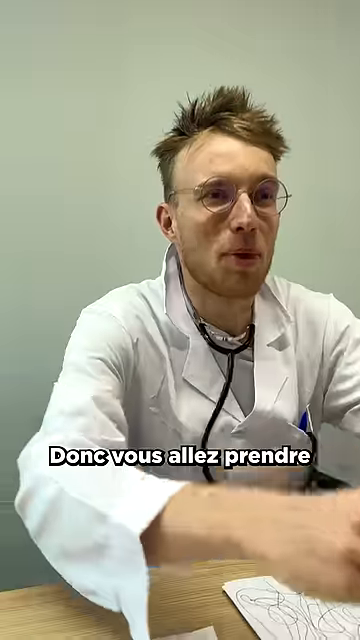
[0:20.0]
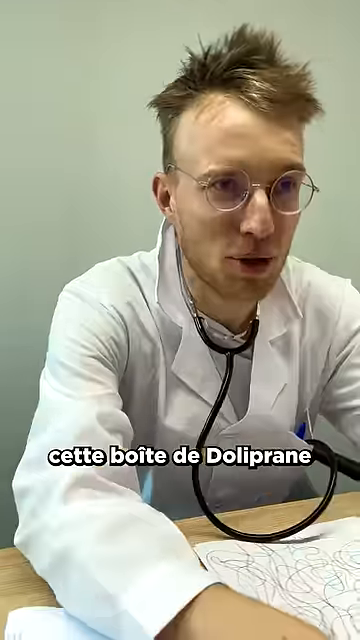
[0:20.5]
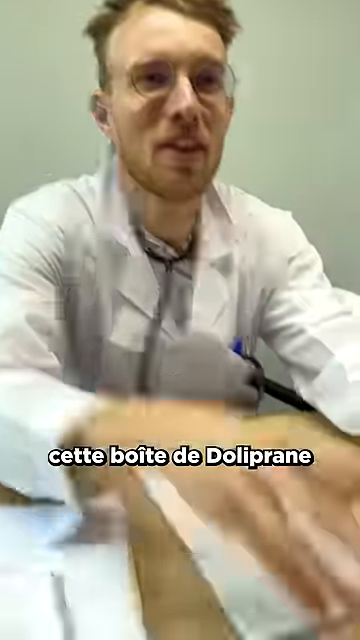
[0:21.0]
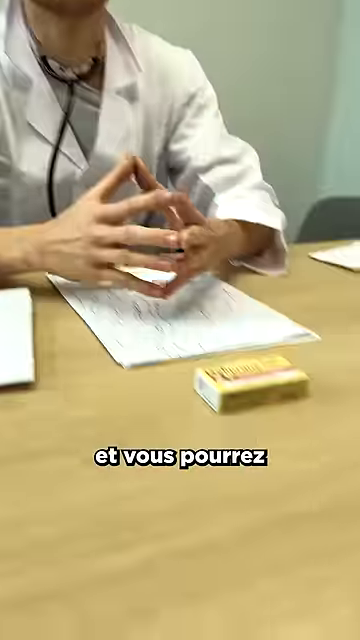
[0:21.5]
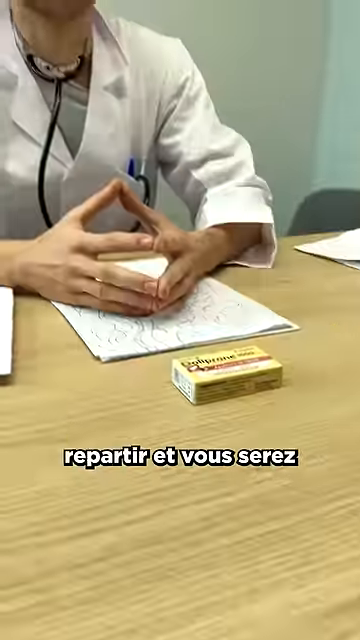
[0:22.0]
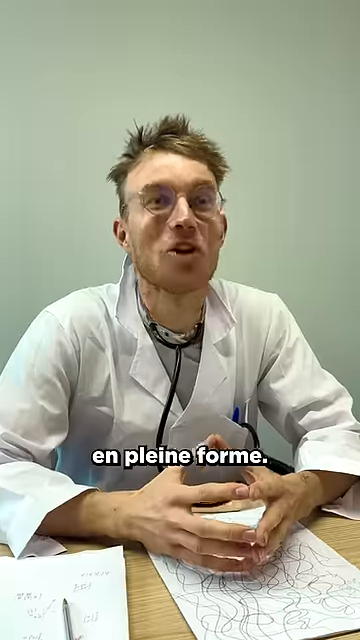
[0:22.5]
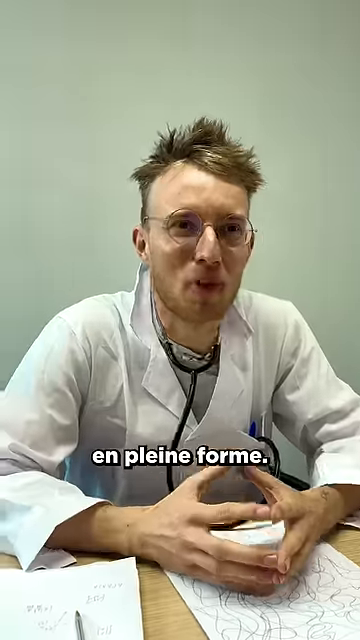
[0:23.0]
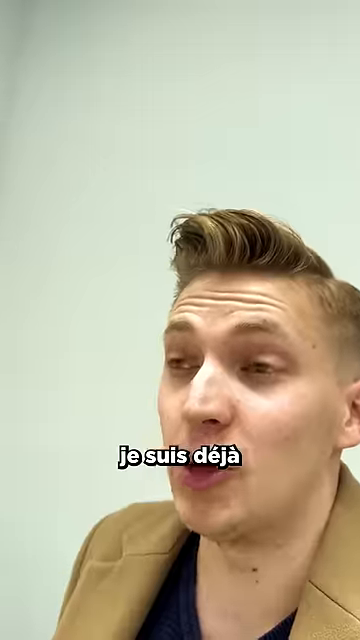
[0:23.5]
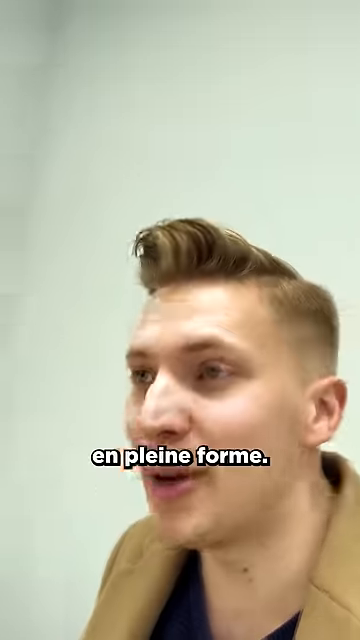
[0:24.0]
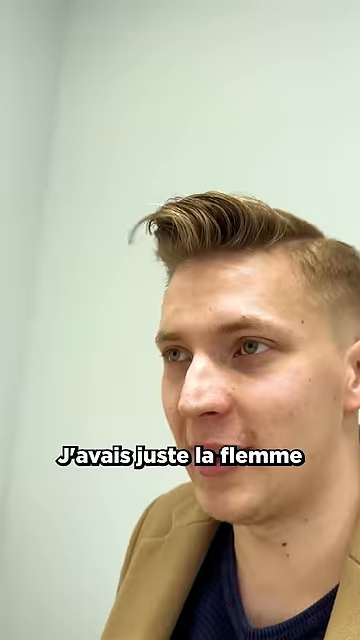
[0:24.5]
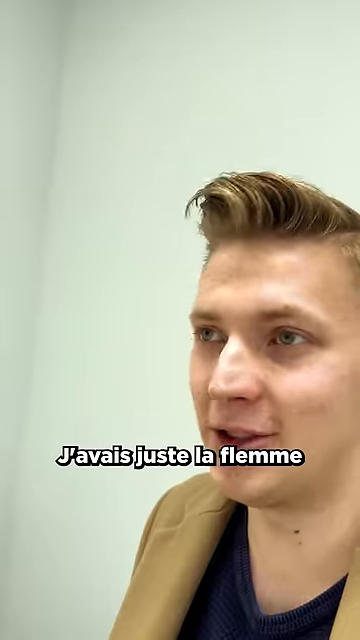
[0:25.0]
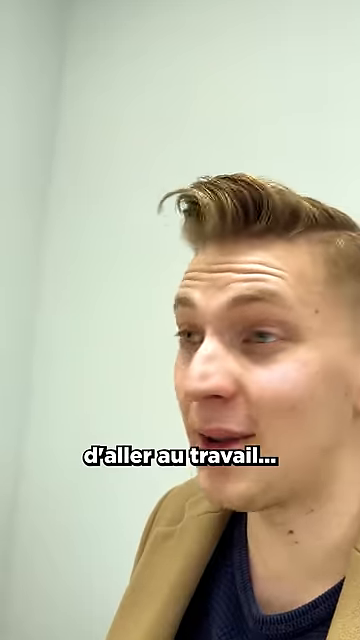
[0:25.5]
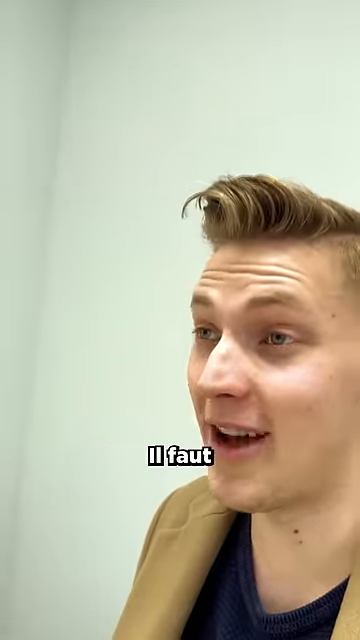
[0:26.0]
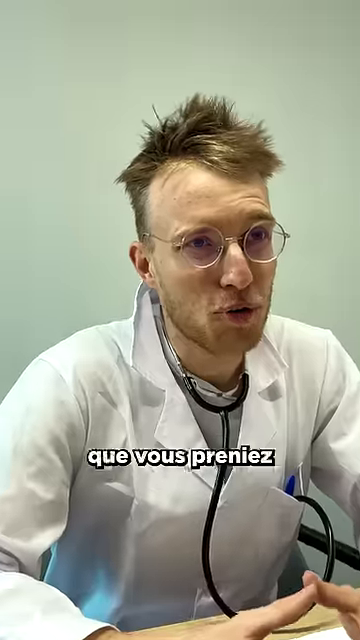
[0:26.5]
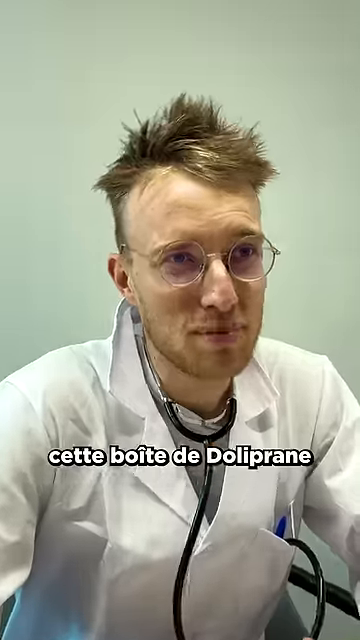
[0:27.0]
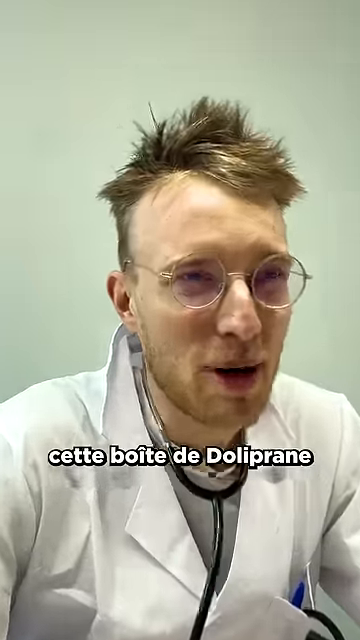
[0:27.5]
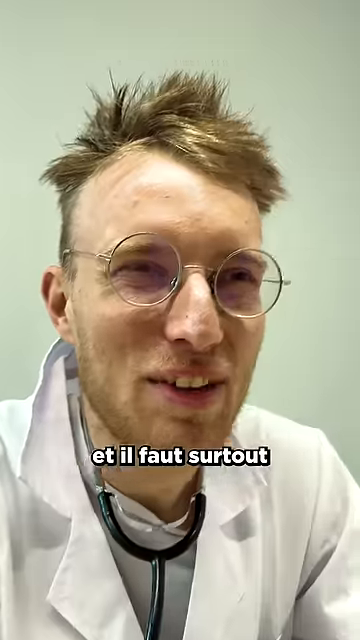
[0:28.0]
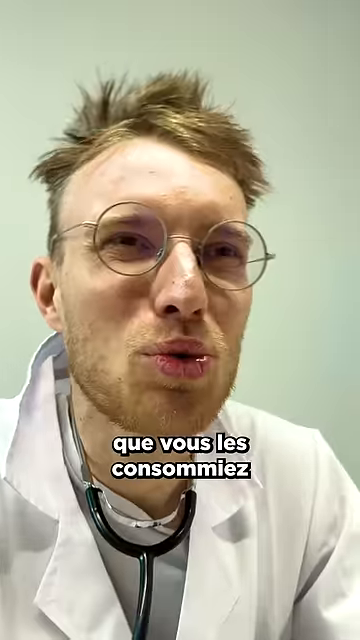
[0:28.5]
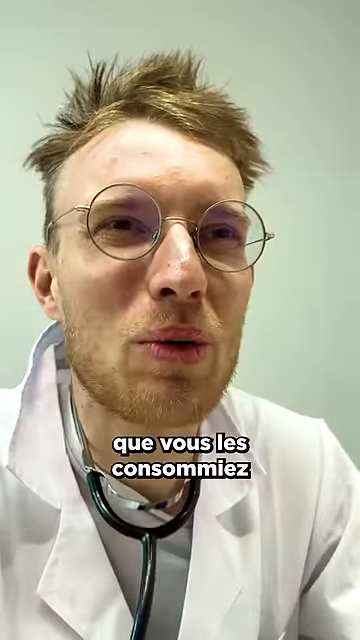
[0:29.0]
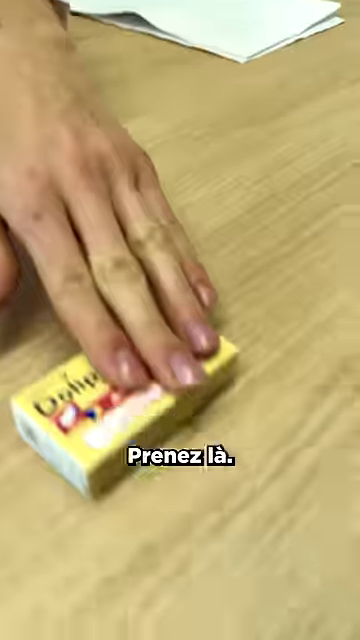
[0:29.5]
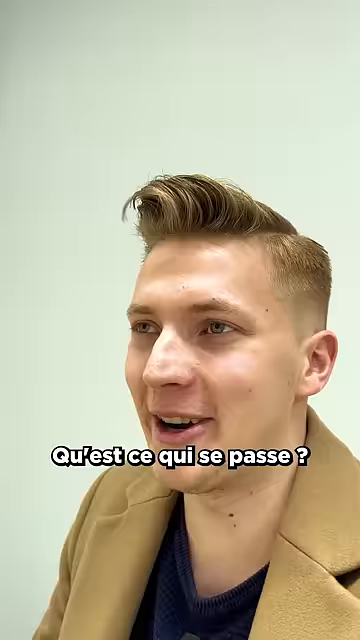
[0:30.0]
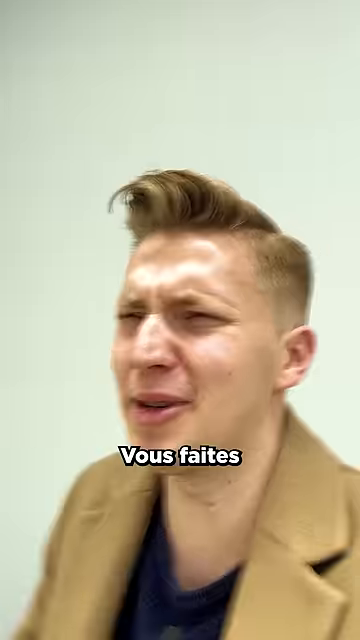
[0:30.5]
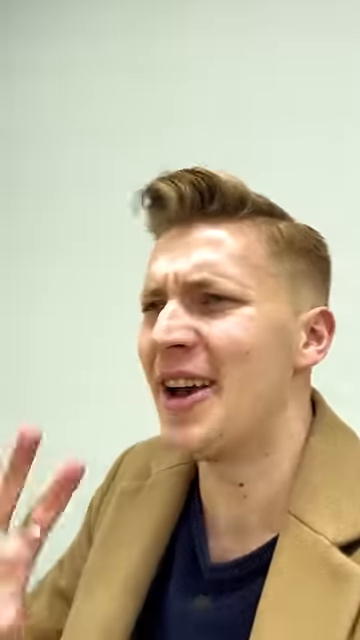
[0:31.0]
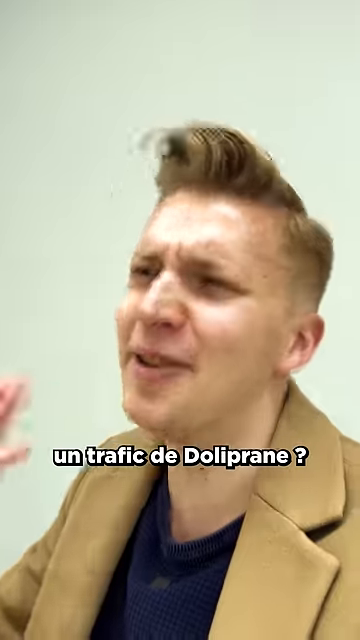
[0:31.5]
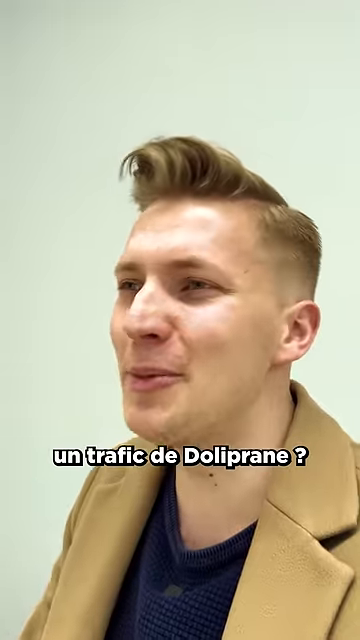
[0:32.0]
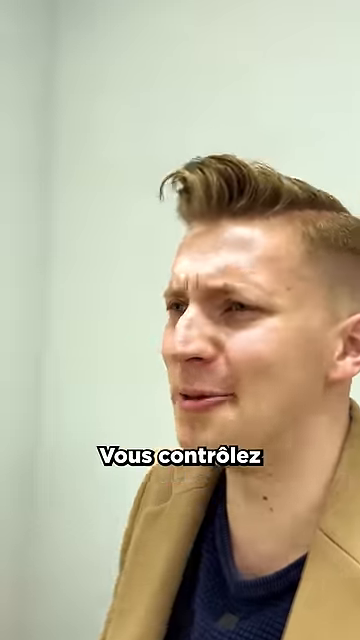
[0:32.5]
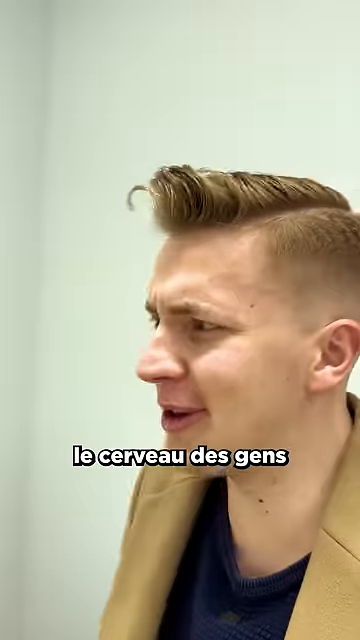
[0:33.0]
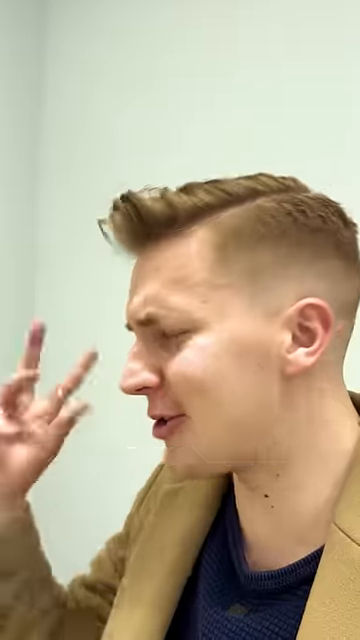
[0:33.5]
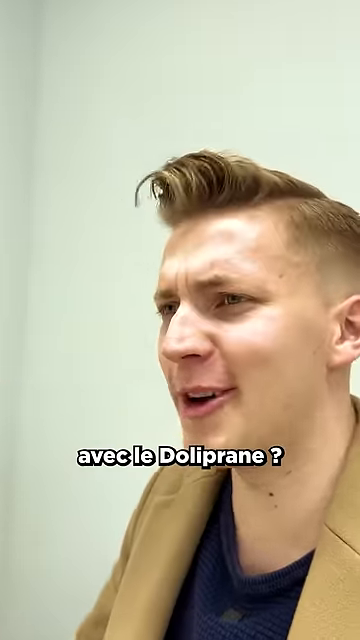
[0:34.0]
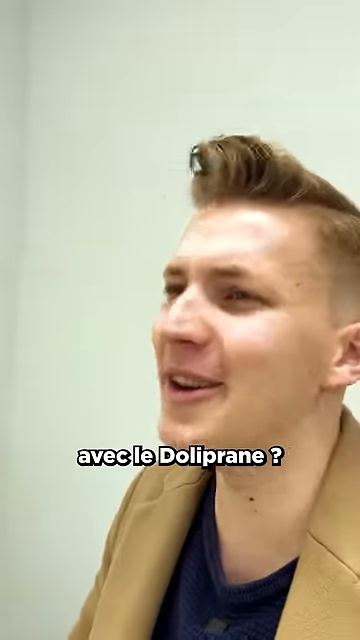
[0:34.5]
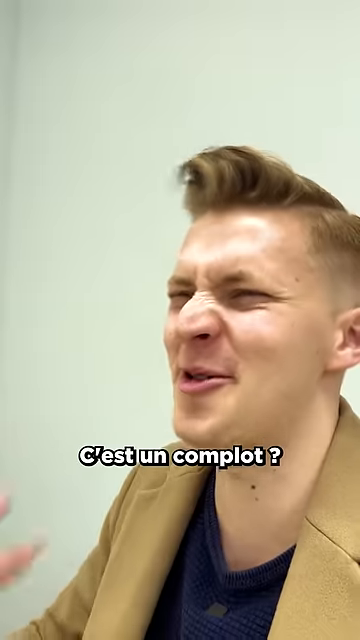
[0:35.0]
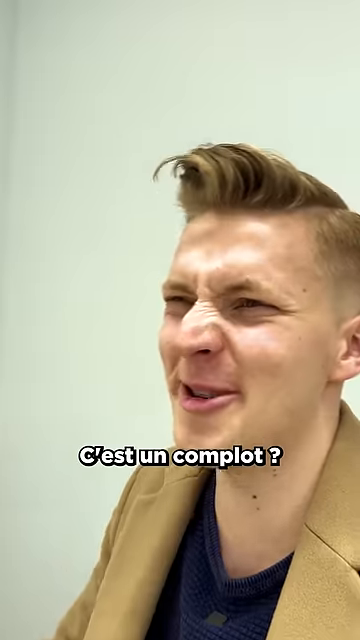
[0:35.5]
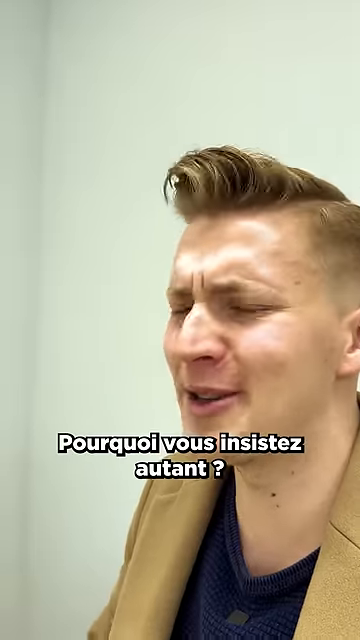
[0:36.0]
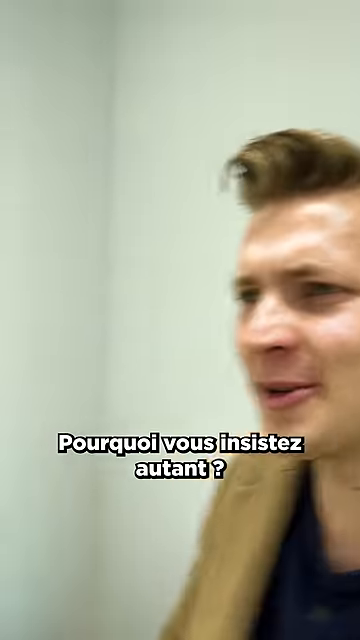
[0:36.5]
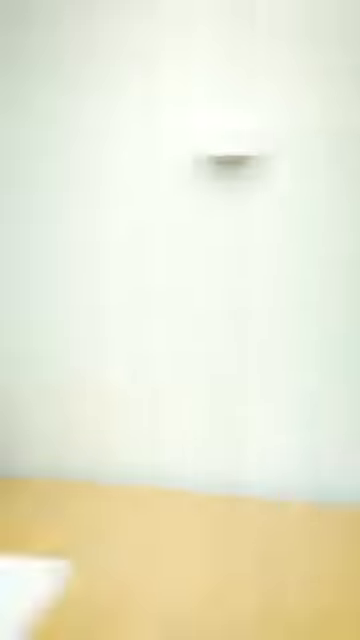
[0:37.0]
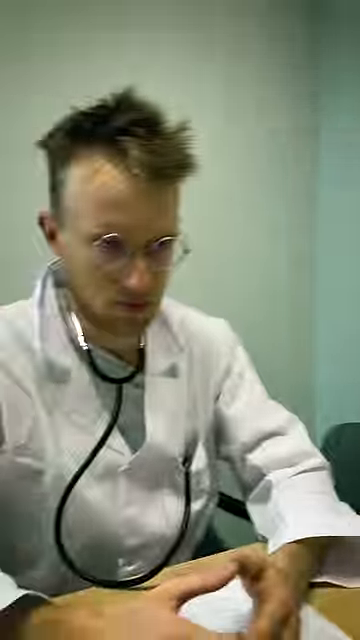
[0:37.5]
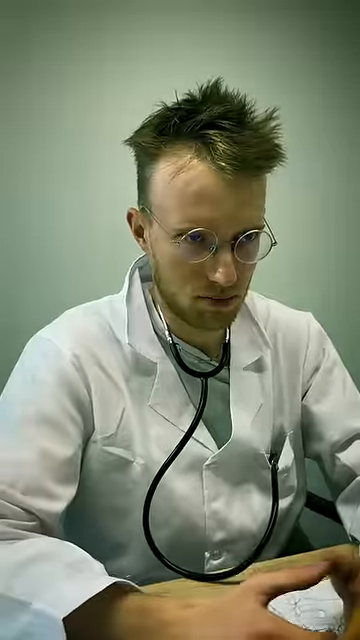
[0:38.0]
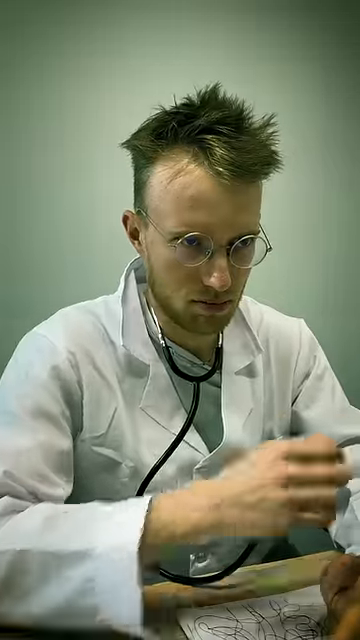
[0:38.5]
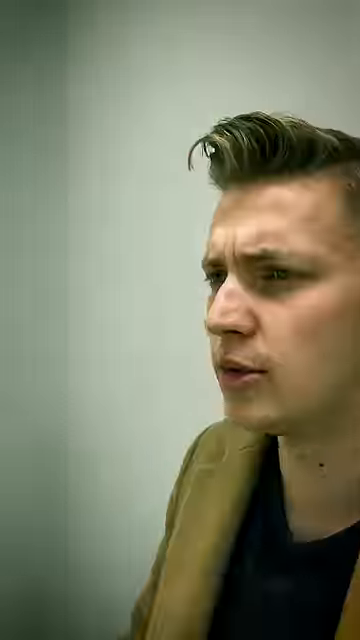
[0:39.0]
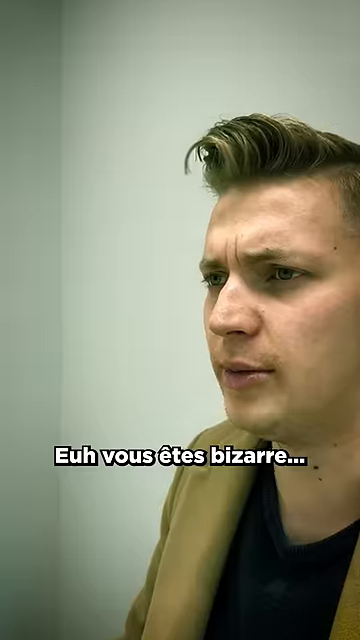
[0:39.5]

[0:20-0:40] A doctor puts an unidentifiable object on the table, and across from him a man is talking. The two look somewhat alike and may be the same man, though possibly not. They have a lively conversation in a foreign language that might be French. Both are white men, one dressed as a doctor and the other wearing a jacket, in a nondescript room. Captions in a foreign language pass by very quickly.